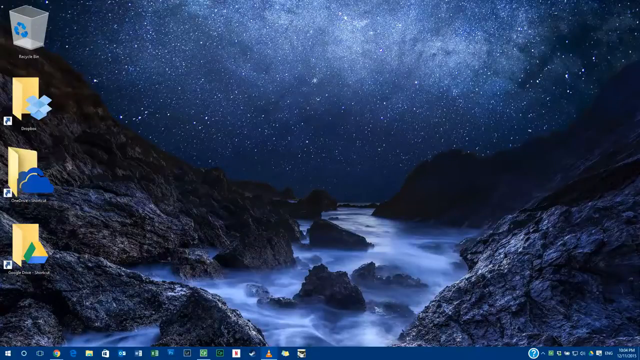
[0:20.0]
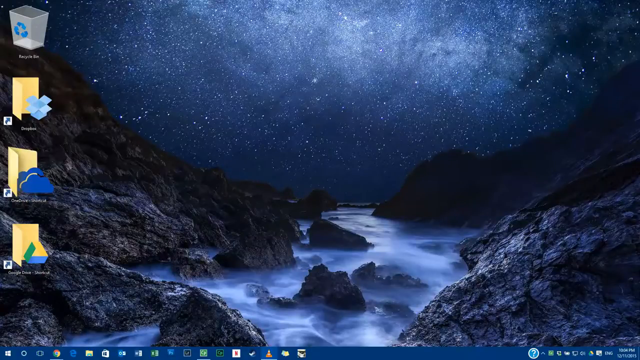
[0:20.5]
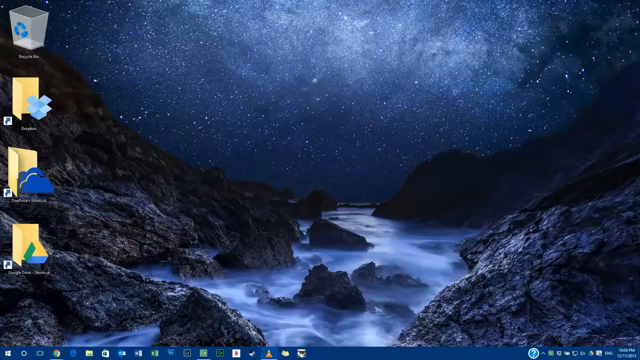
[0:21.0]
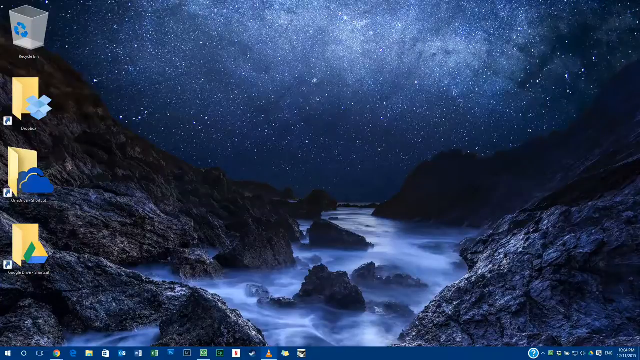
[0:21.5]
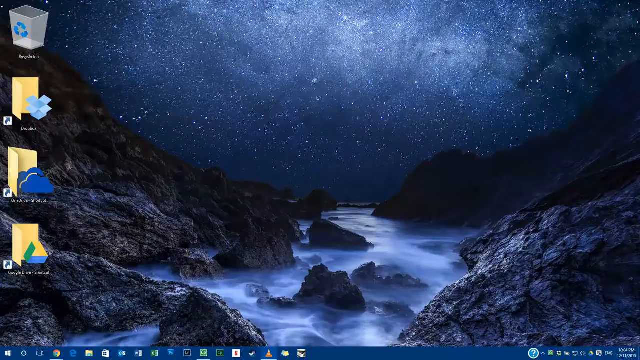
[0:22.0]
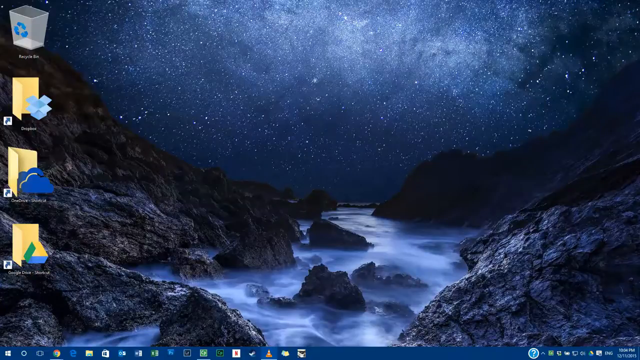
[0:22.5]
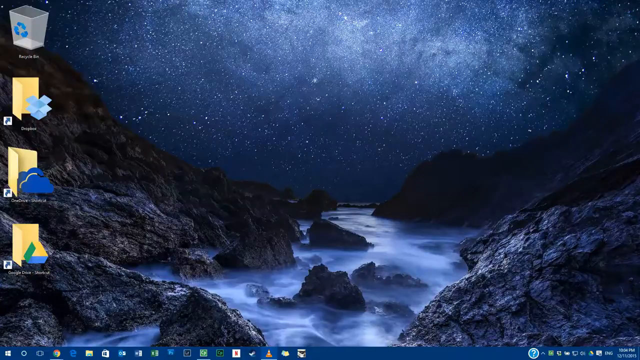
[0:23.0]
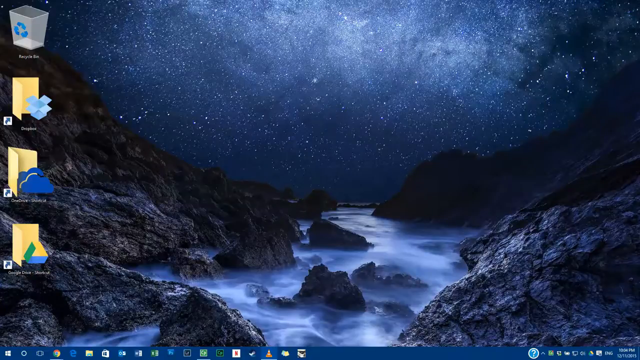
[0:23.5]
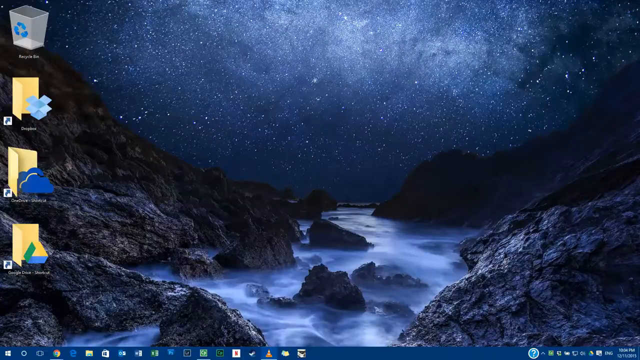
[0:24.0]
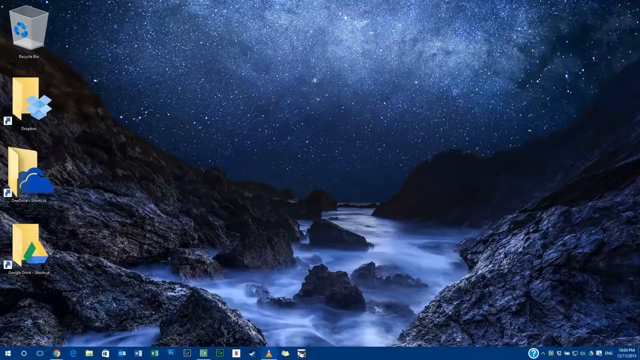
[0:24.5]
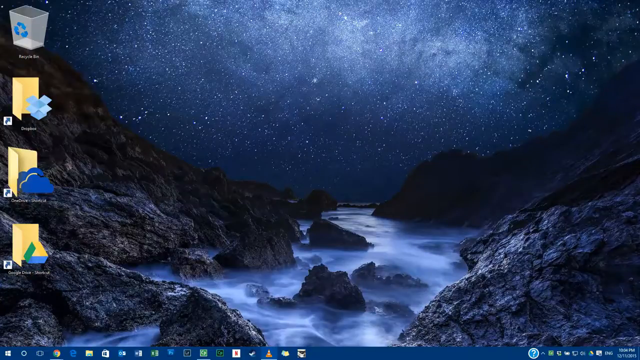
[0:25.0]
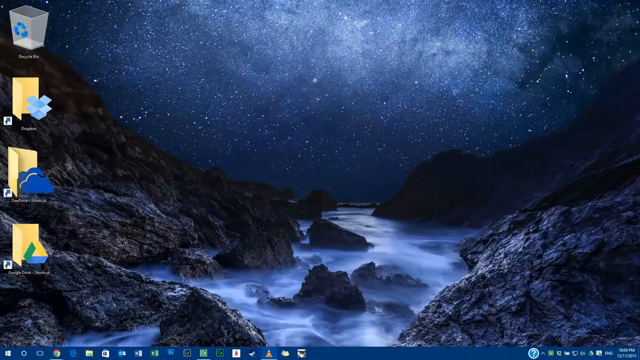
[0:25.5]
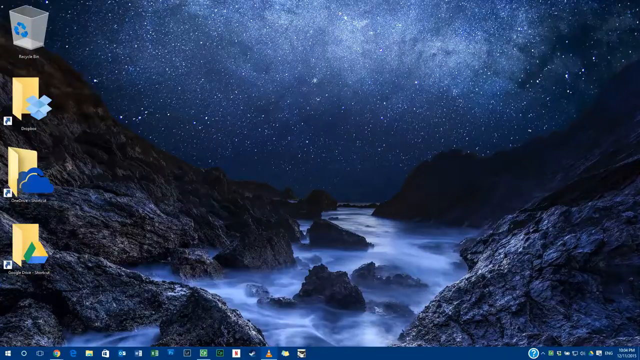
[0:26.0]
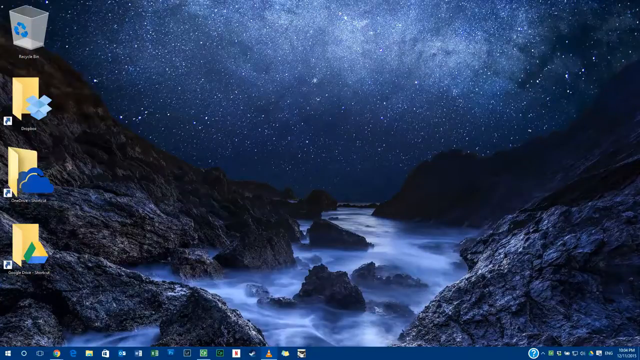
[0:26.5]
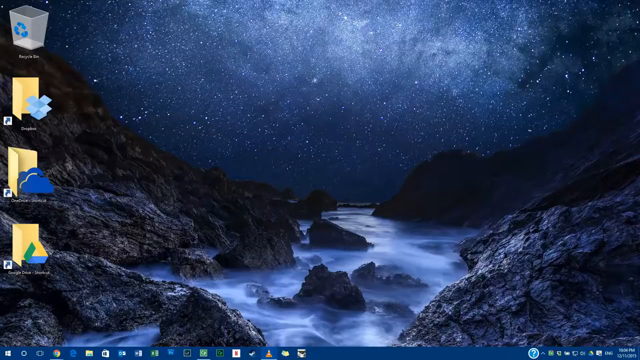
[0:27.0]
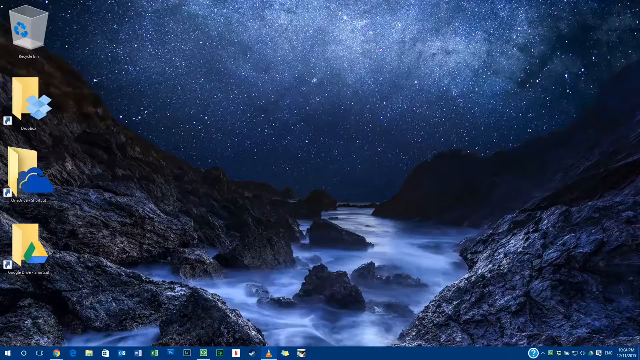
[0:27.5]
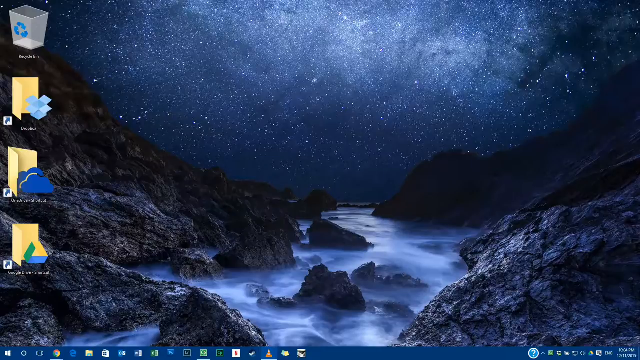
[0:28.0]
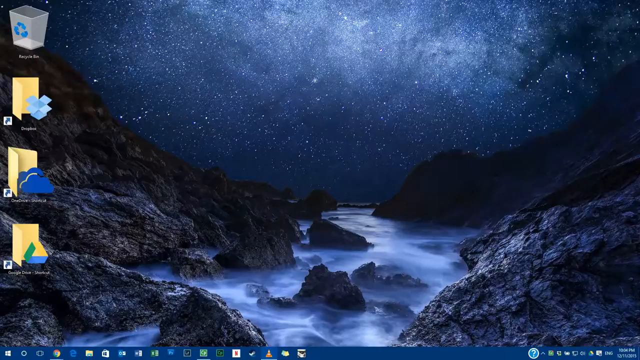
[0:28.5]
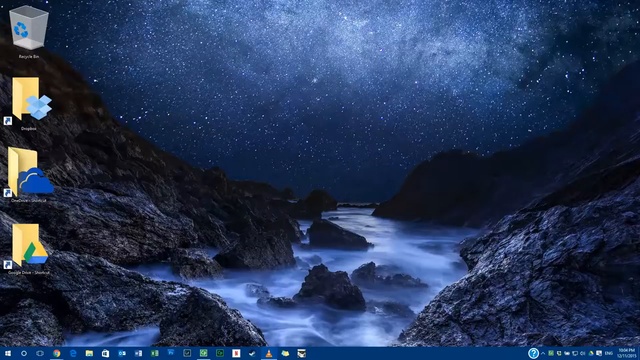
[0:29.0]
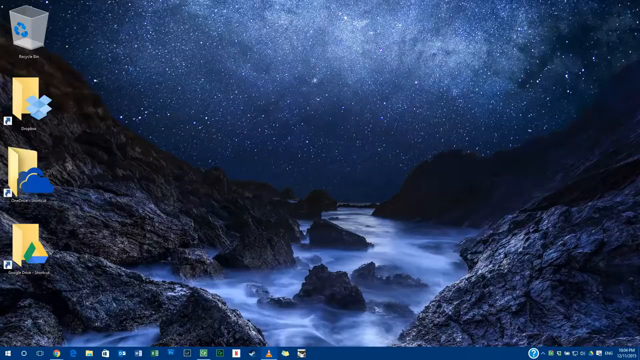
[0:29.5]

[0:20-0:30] The desktop background has darker and white areas. Folders run down the left-hand side of the screen, with the recycling bin at the top left. Stars appear, and there are valleys of water around the bottom left of the background.